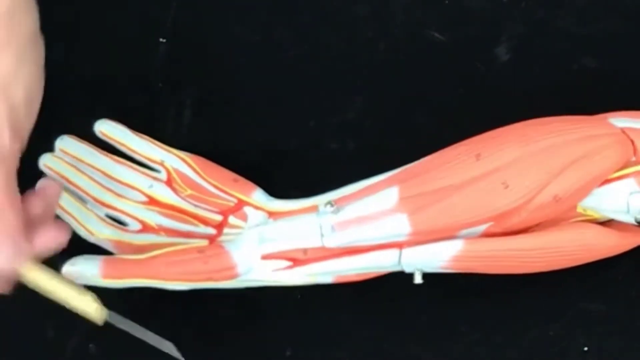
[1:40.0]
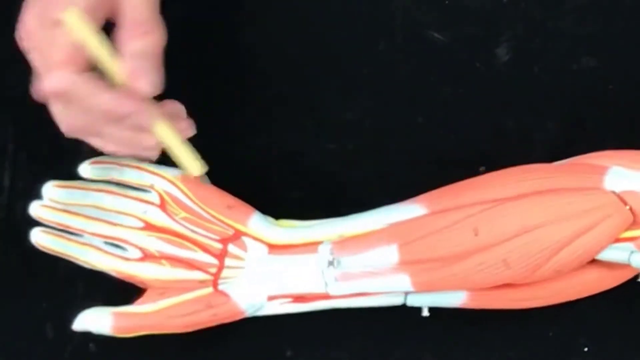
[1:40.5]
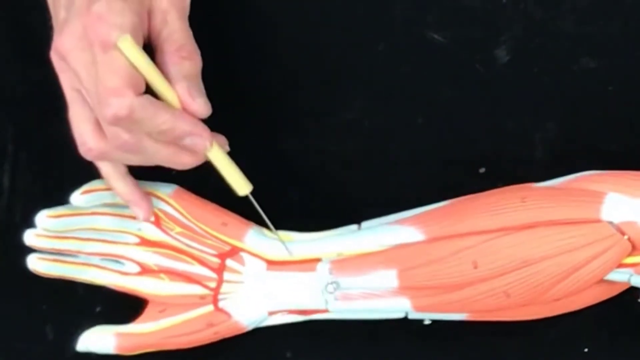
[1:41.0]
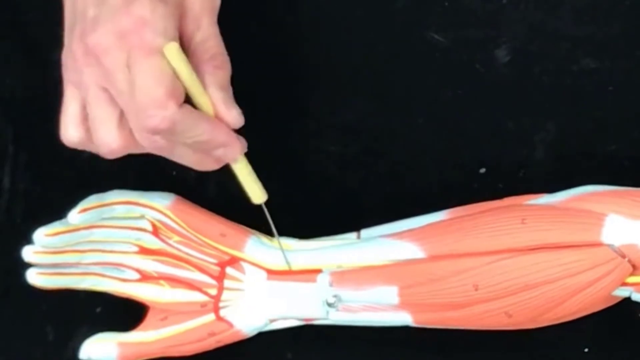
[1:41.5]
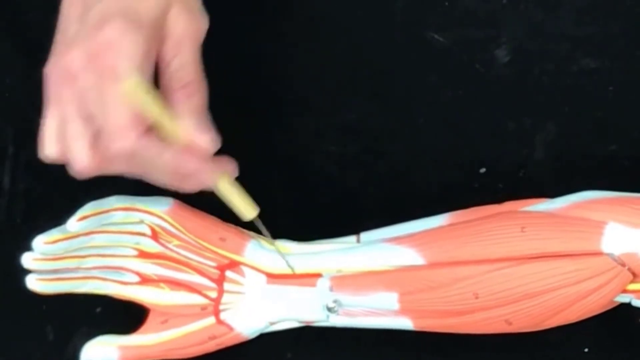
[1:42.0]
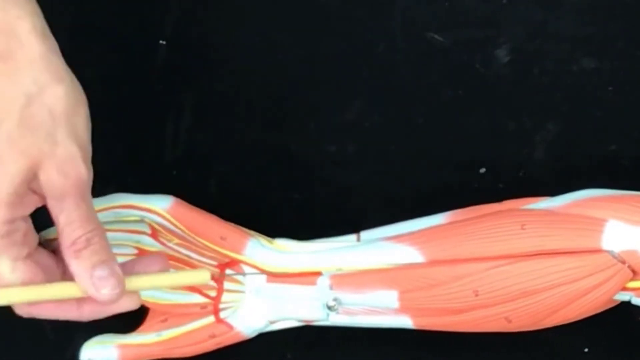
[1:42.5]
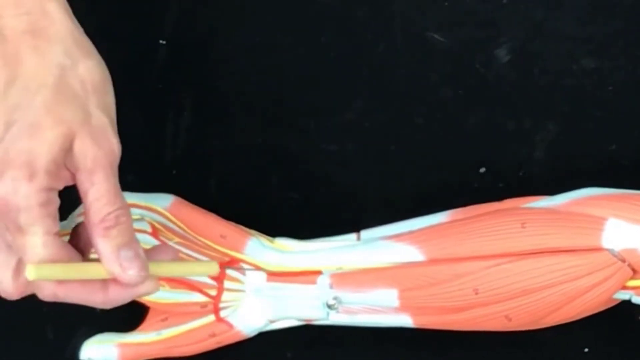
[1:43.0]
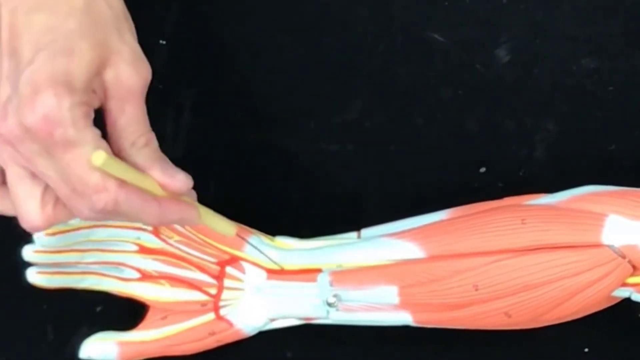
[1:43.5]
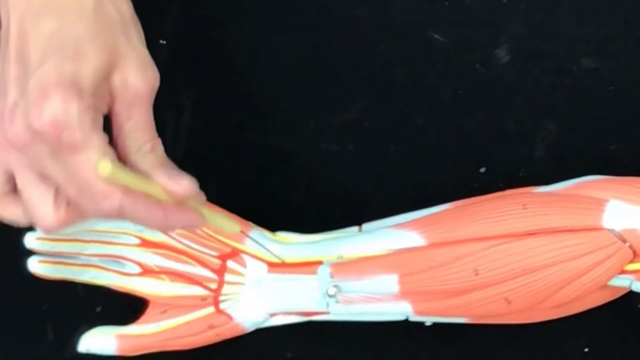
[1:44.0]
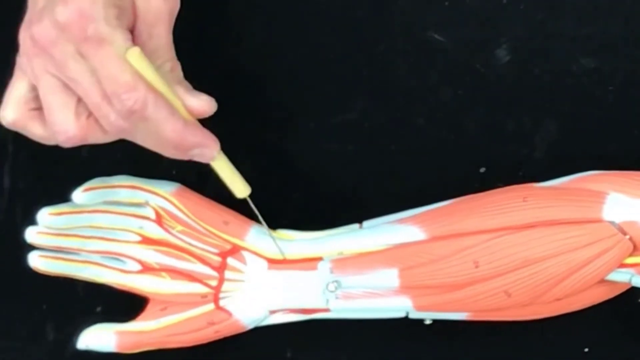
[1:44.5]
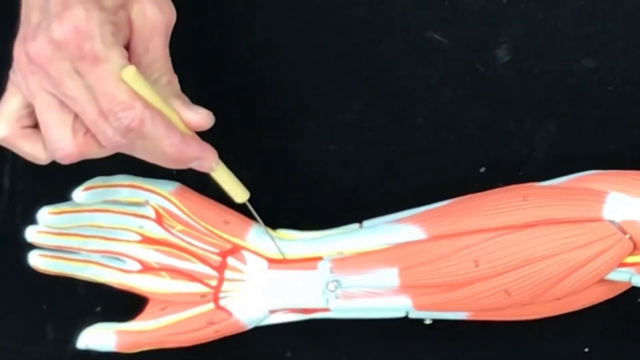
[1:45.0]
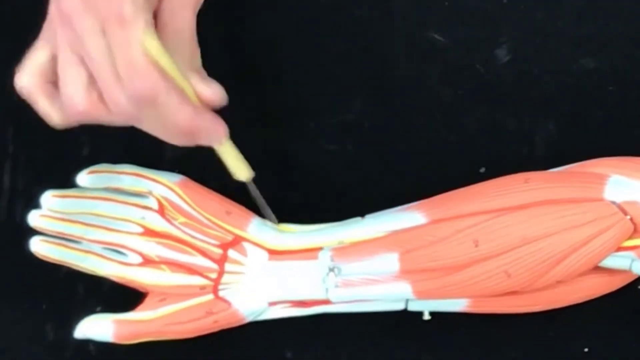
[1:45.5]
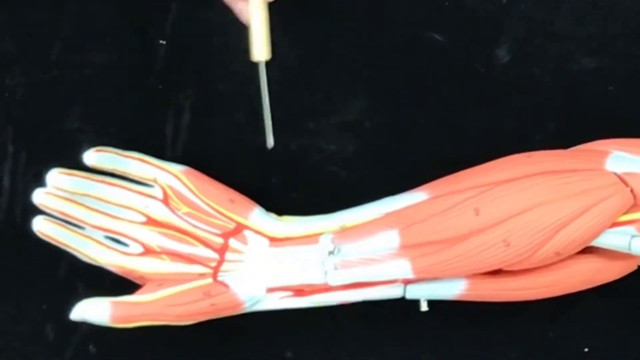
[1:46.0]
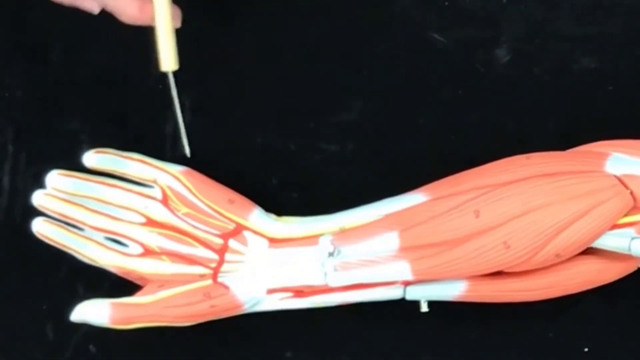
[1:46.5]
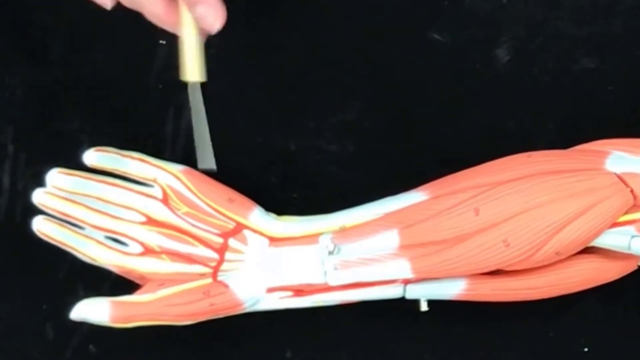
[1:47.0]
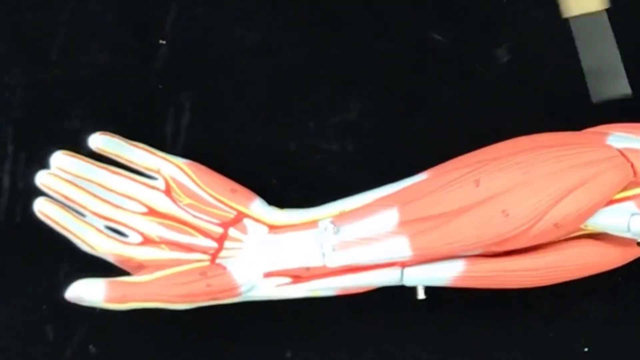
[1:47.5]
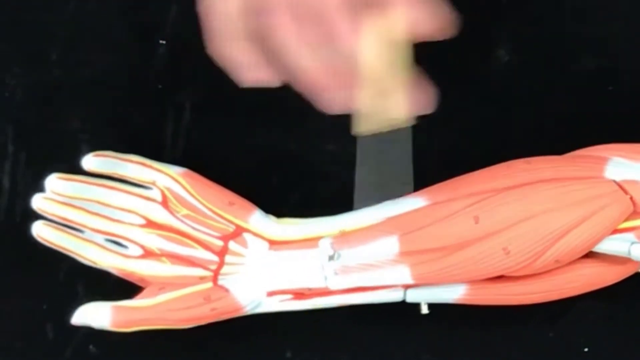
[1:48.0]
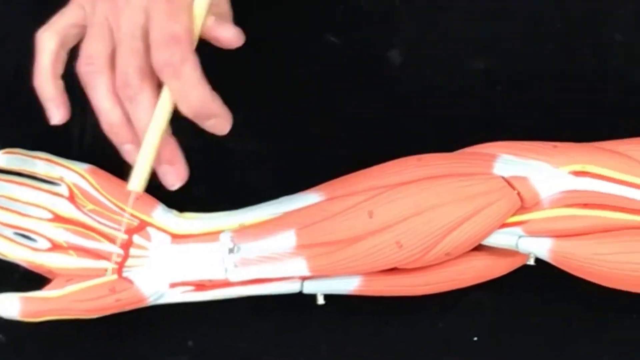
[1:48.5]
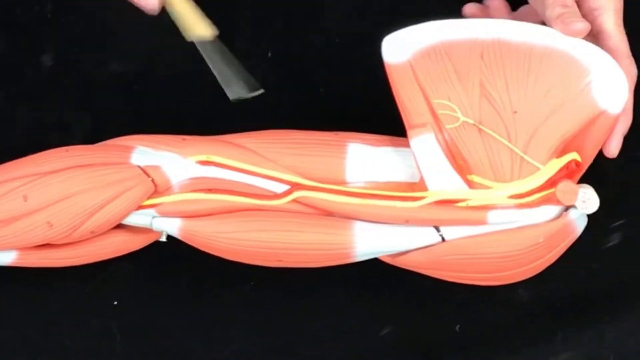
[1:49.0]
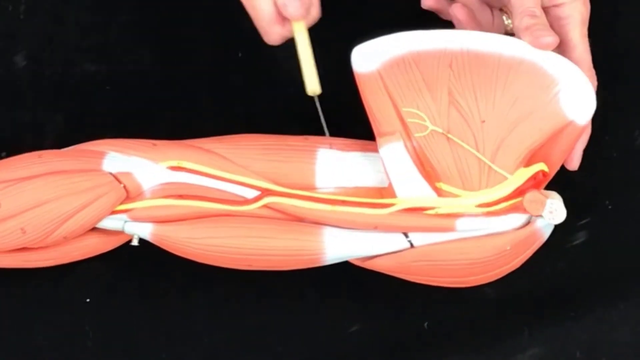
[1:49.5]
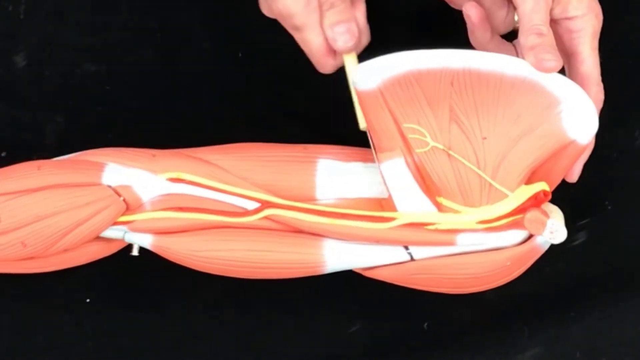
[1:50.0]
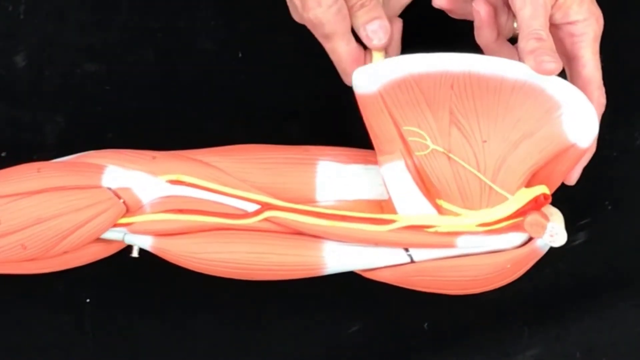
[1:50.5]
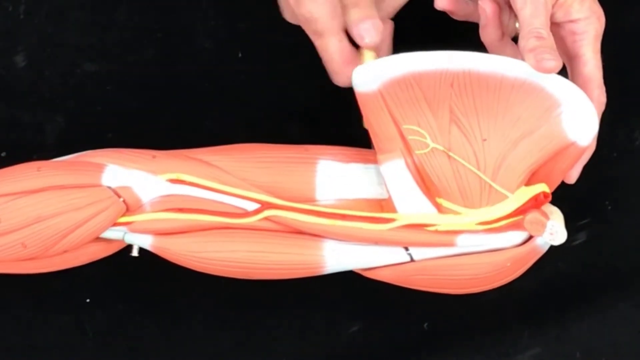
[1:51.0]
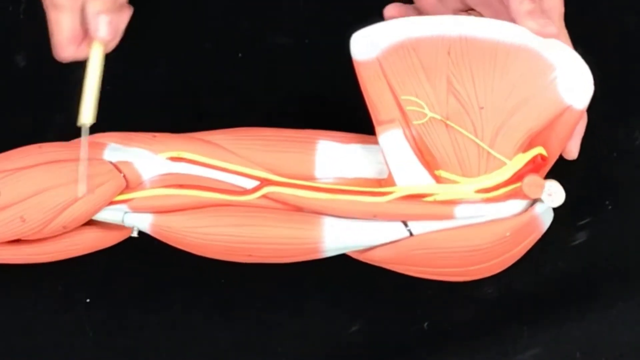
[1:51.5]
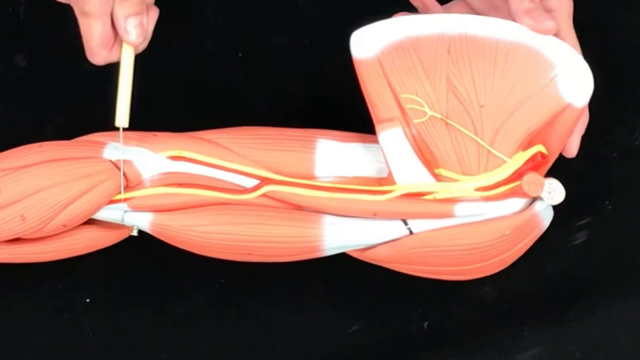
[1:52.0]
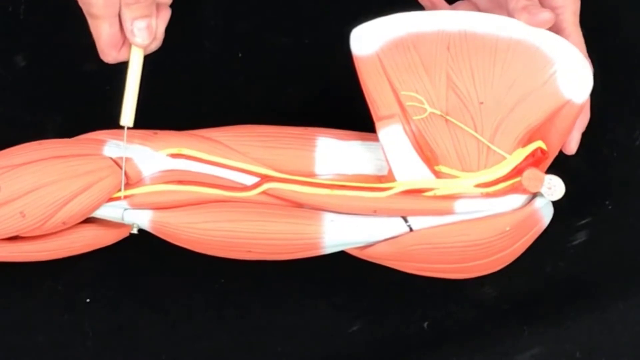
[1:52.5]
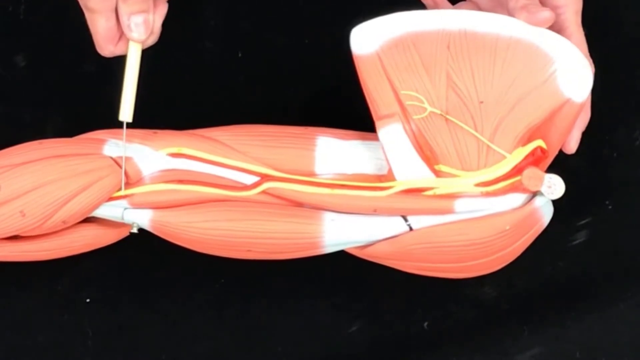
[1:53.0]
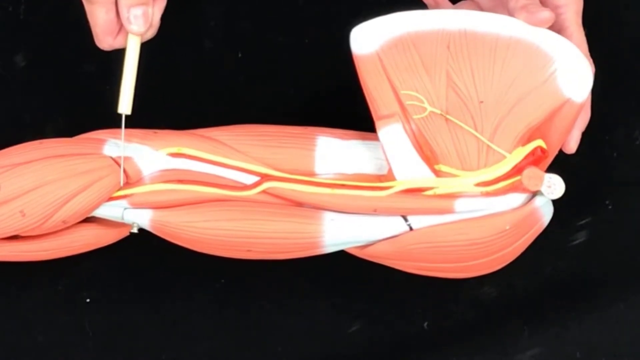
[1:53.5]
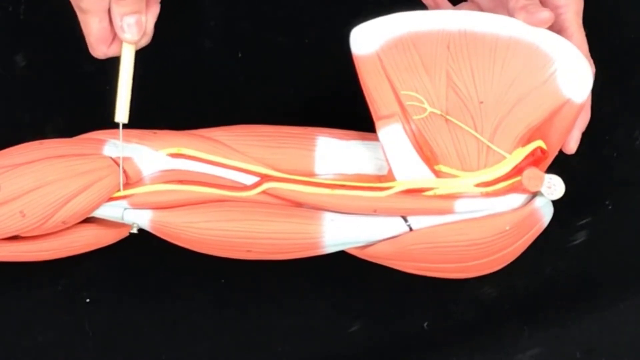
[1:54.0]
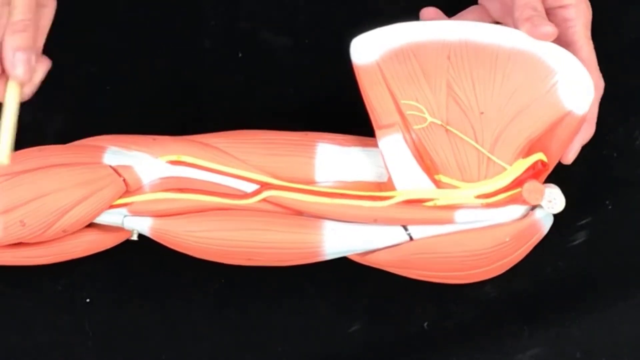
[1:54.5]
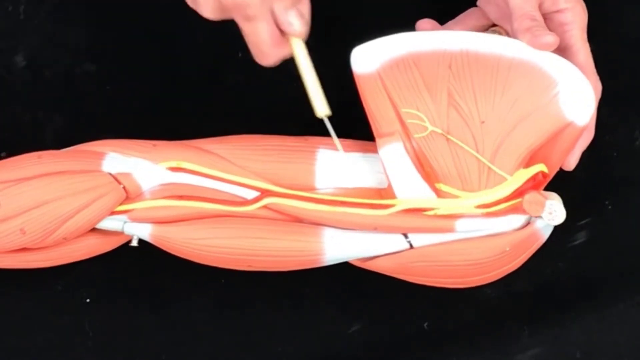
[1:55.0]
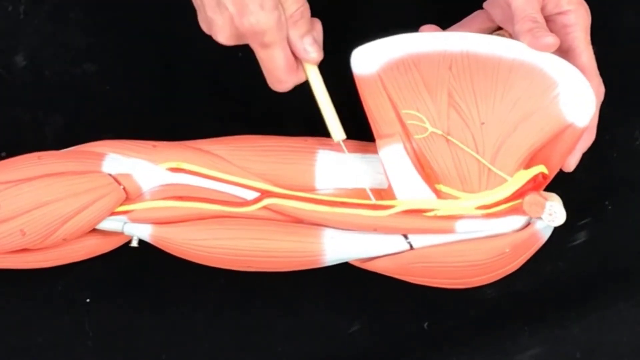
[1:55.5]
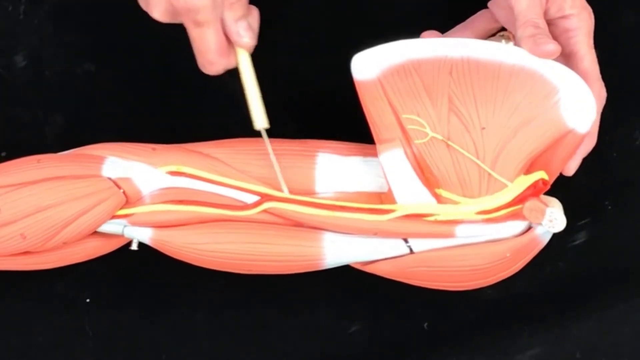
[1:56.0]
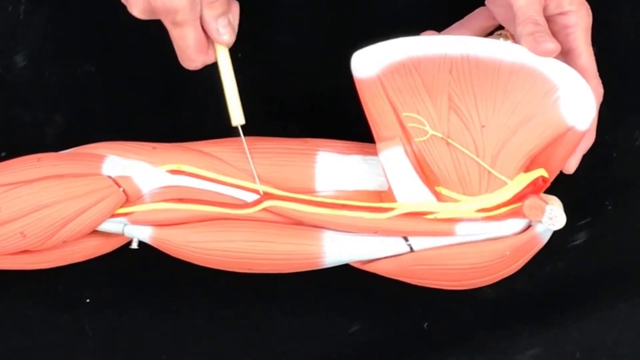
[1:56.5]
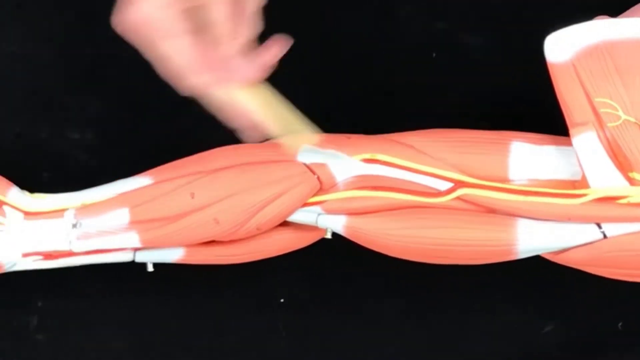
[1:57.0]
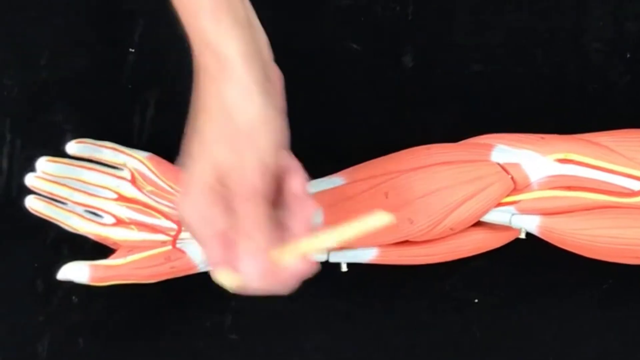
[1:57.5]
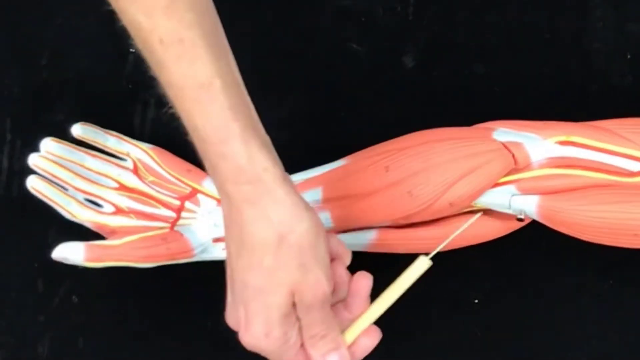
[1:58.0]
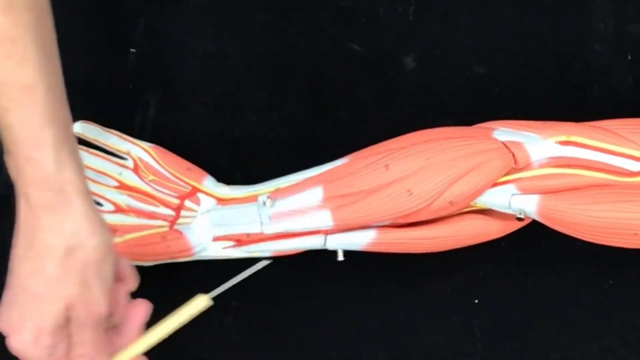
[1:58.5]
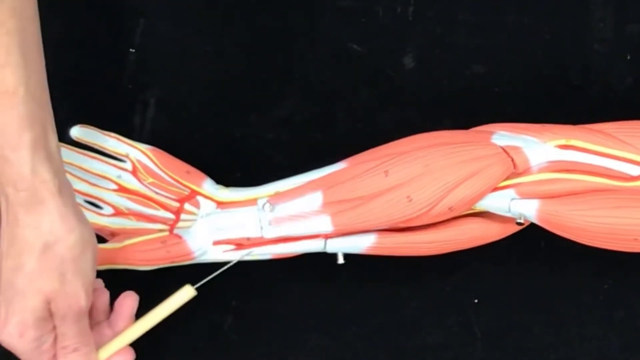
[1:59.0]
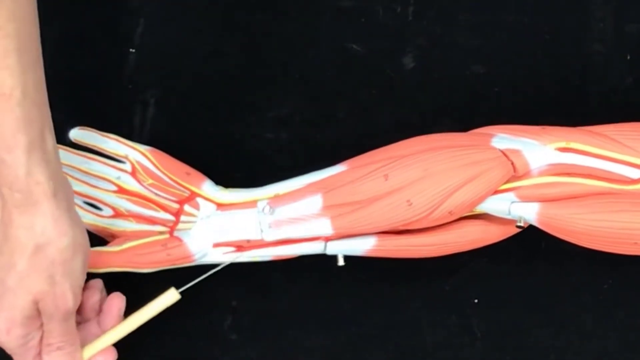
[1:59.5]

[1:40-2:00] Holding the pointer in her right hand, the teacher uses her left hand to roll the arm model down onto its thumb, so the pointer points to the outside of the underside of the arm at a vein or artery that runs along the outside of the arm, with ligaments and tendons on the outside and this artery or vein underneath the muscles, coming out into the base of the hand. She then moves back up to underneath the shoulder cuff, where the armpit would be, points there, moves the pointer quickly to the inner elbow, takes it back up to the armpit, and runs it down the upper arm and the lower arm, pointing between the muscle masses. She appears to be showing the second major vein or artery coming down the arm and emerging in the outer part of the hand, under the pinky finger.